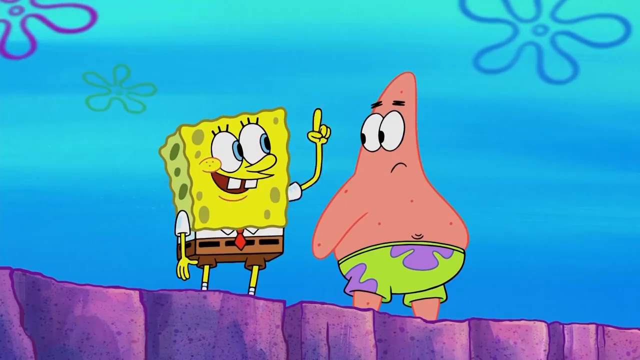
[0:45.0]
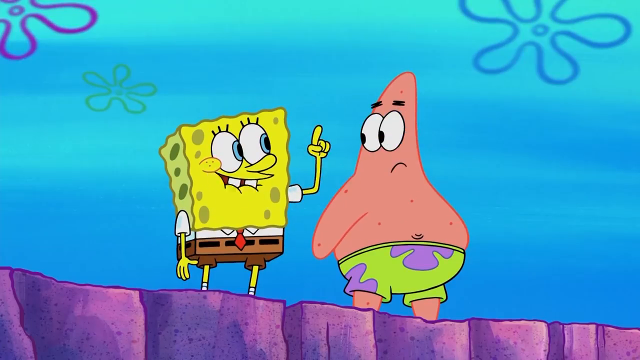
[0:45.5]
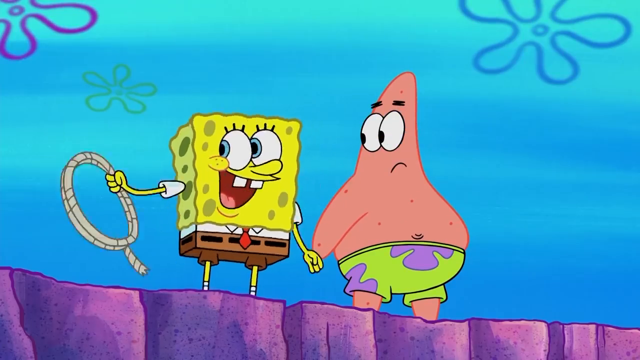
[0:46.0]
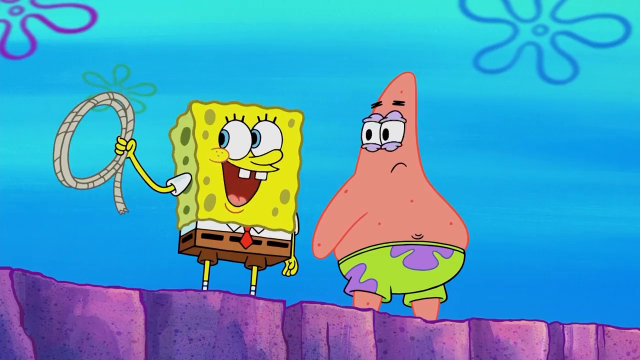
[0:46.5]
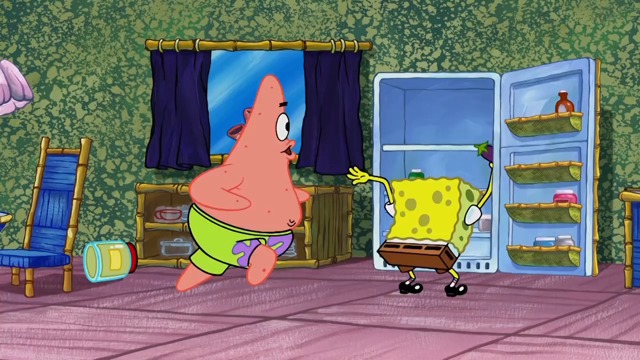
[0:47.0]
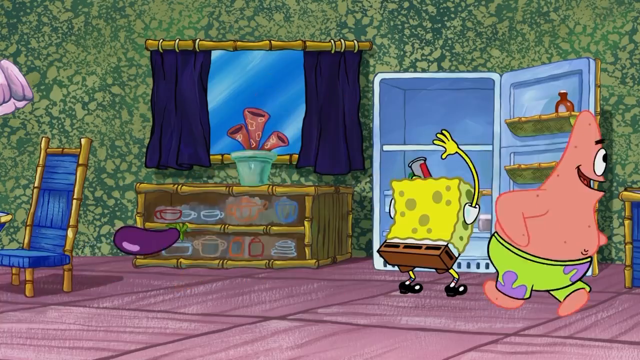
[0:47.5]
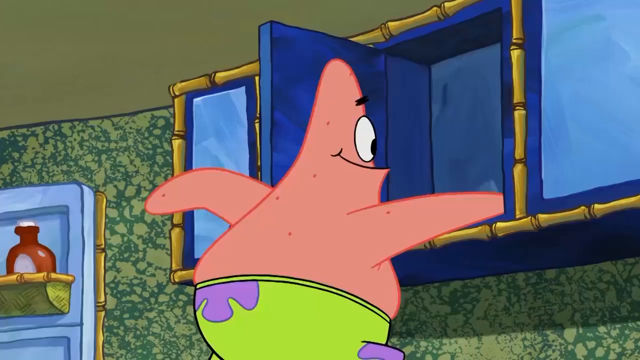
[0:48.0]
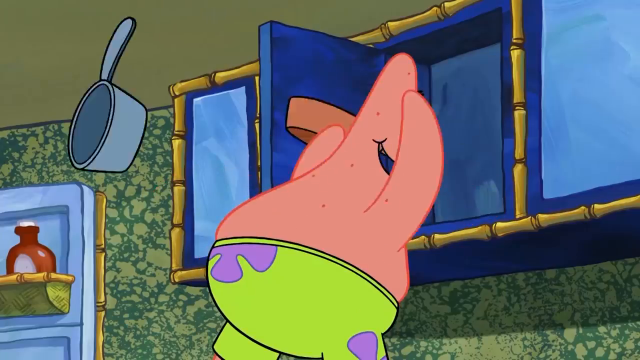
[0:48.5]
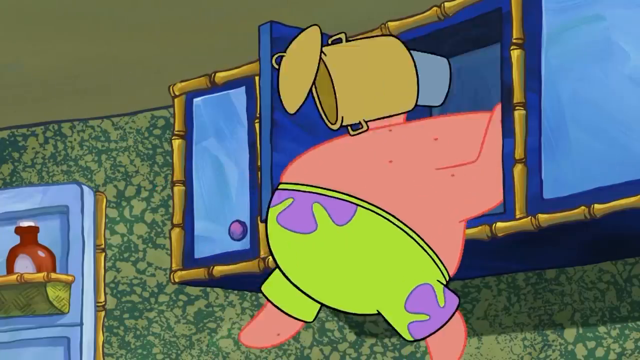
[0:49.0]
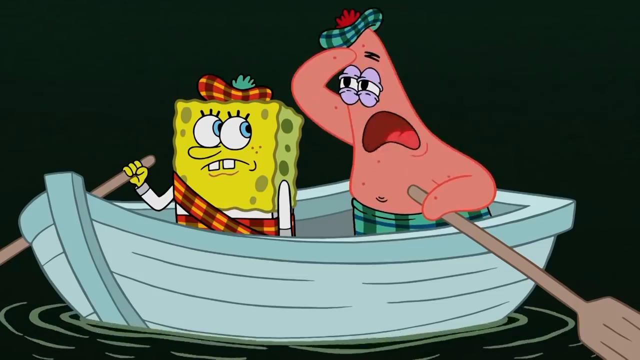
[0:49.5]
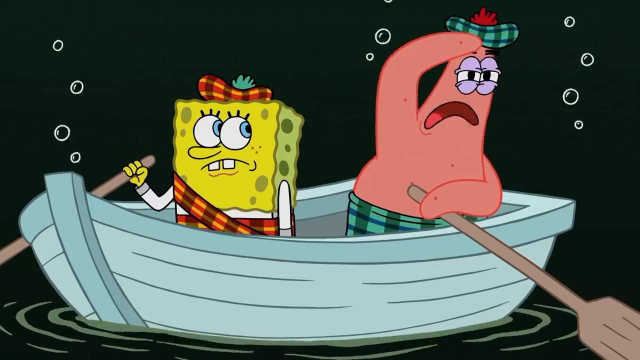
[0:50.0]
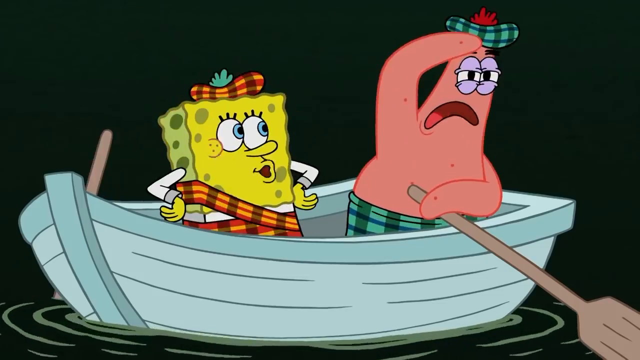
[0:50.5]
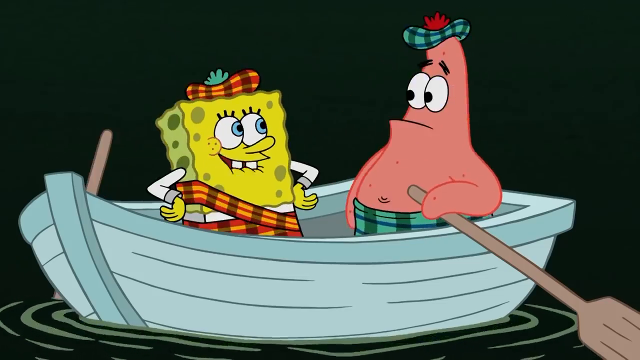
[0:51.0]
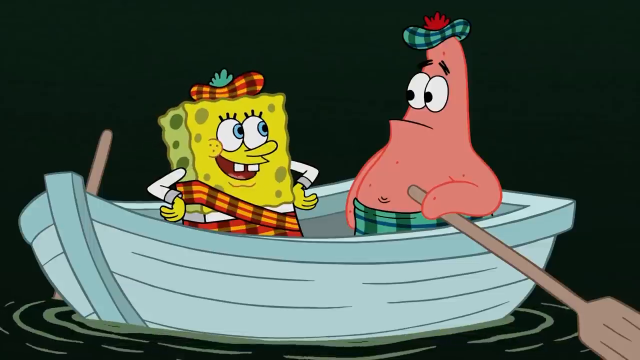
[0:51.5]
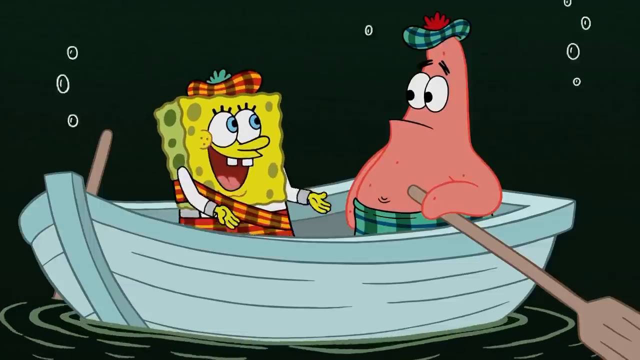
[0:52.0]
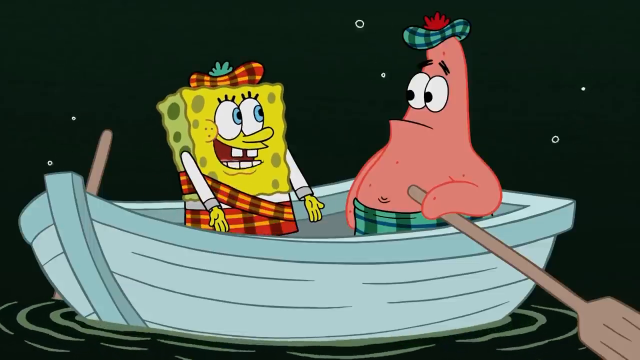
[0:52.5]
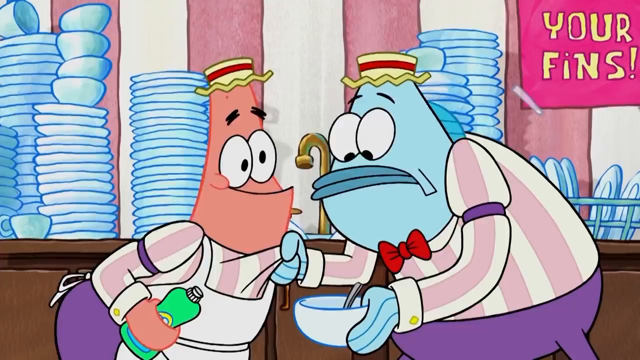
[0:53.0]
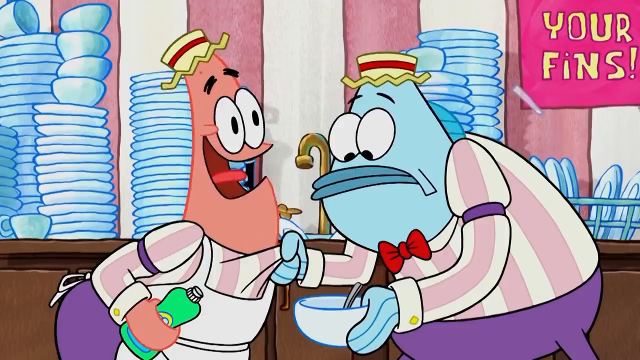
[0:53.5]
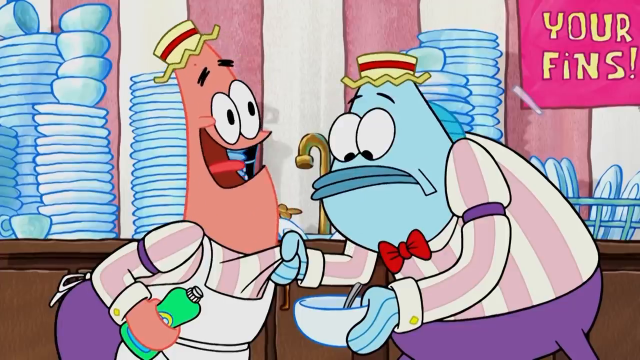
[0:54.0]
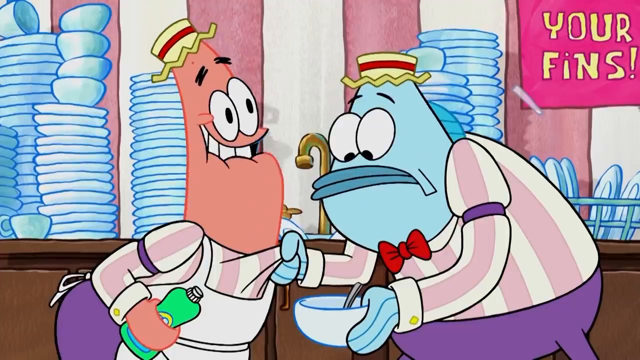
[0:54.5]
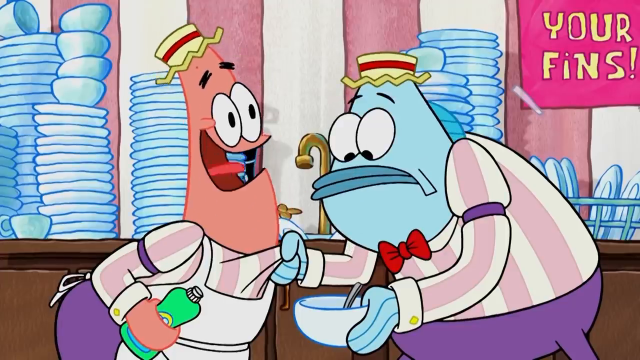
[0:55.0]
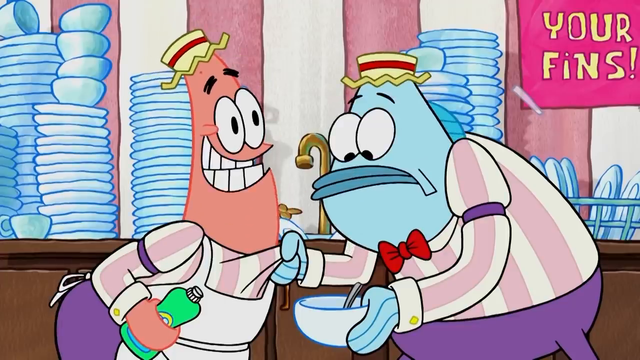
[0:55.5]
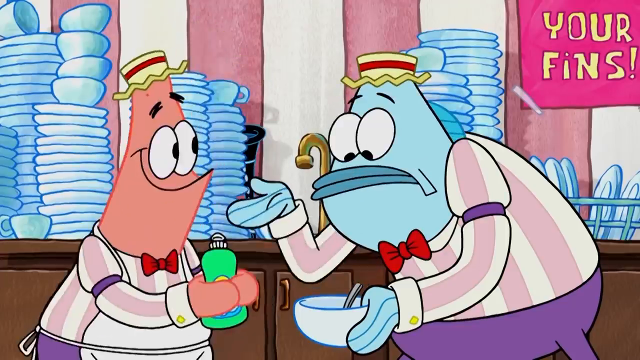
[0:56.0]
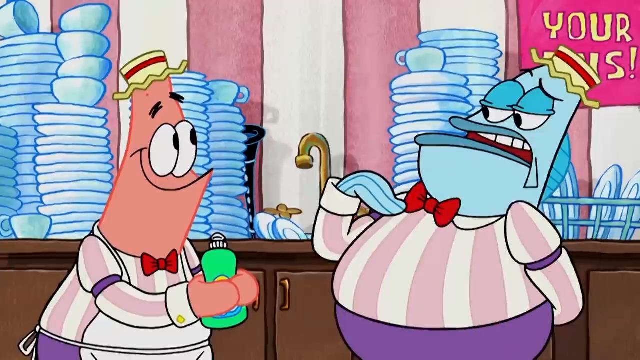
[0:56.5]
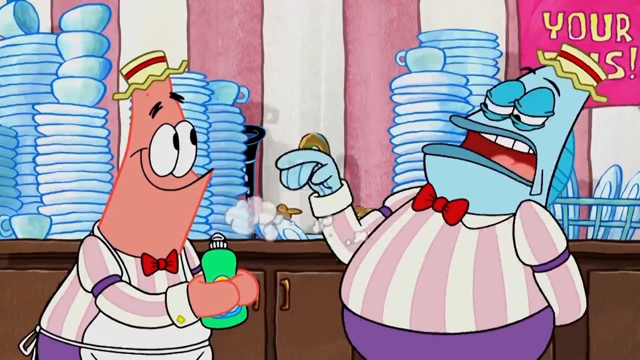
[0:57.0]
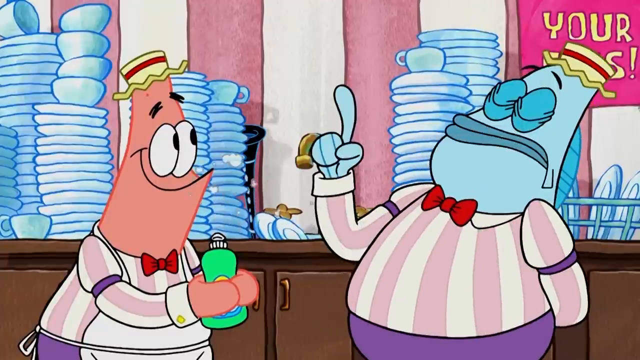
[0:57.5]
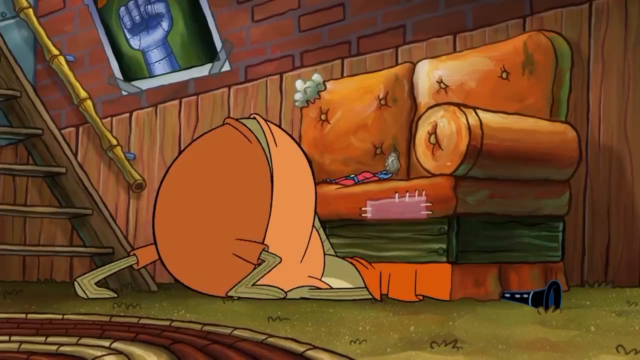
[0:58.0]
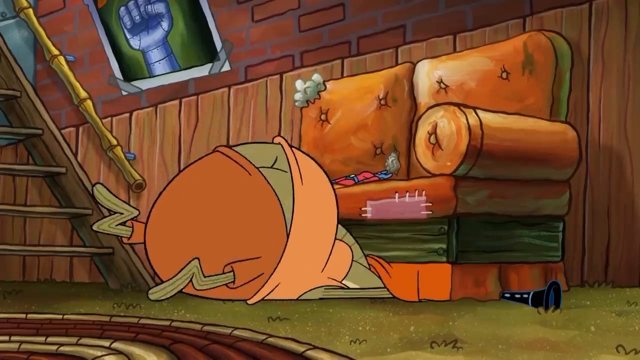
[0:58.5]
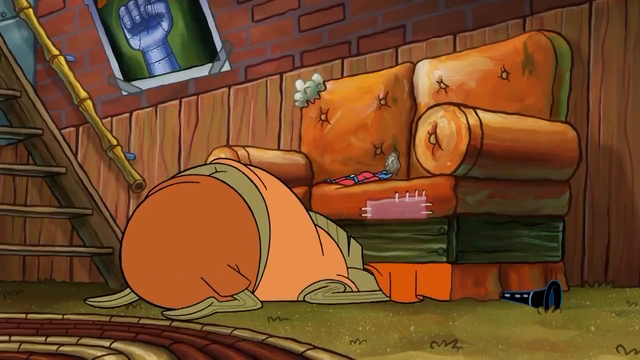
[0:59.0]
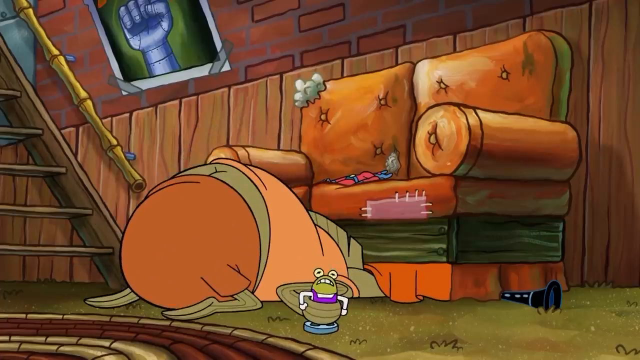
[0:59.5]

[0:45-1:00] SpongeBob and Patrick stand on the edge of a cliff, with ocean water behind them and some star shapes up on the higher ground. SpongeBob has his right hand behind his back and raises one finger on his left hand while talking to Patrick, who looks kind of confused. SpongeBob pulls a rope out from behind his back with his right hand. It cuts to a kitchen scene in the house, where SpongeBob looks through a fridge, throwing all the items out as if digging for something, while Patrick digs through cabinets. Next, SpongeBob and Patrick are in a boat, each with an oar in one hand, wearing flannel wraparounds; SpongeBob puts his hands on his hips and tells Patrick something. Then, at a dishwashing station in a restaurant, Patrick and another creature wear aprons and striped pink shirts, with plates and bowls stacked behind them on drying racks or in stacks. The other creature grabs Patrick's shirt collar and pulls him in tight; Patrick says something to him with a smile, and the other responds by raising one finger. It then cuts to a green creature digging underneath a couch, looking for something.